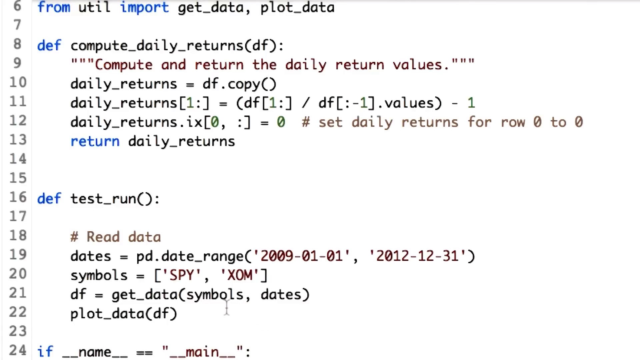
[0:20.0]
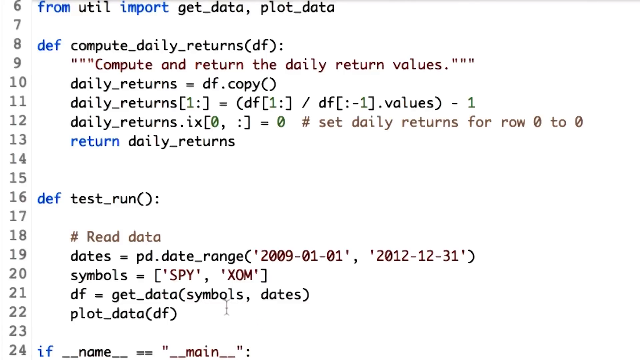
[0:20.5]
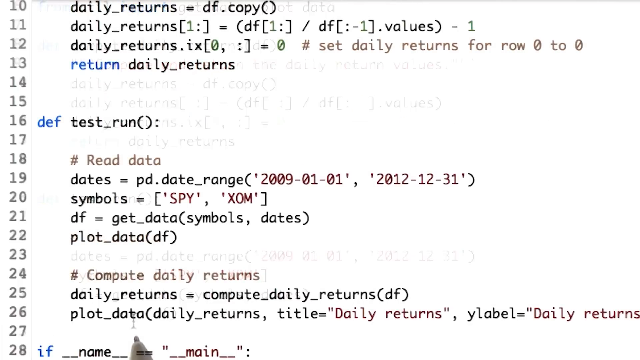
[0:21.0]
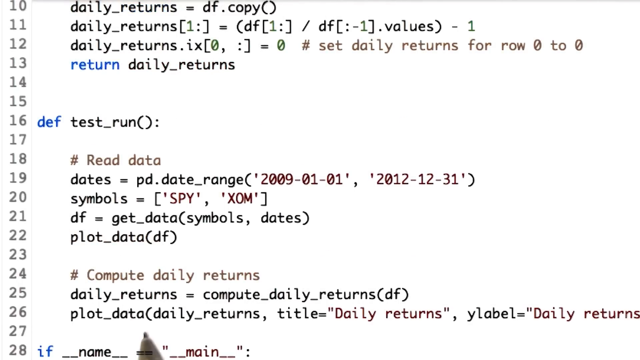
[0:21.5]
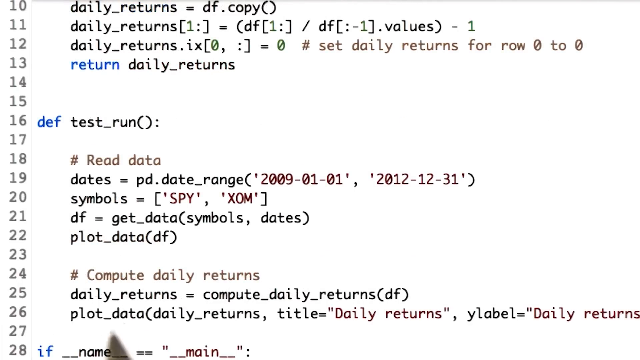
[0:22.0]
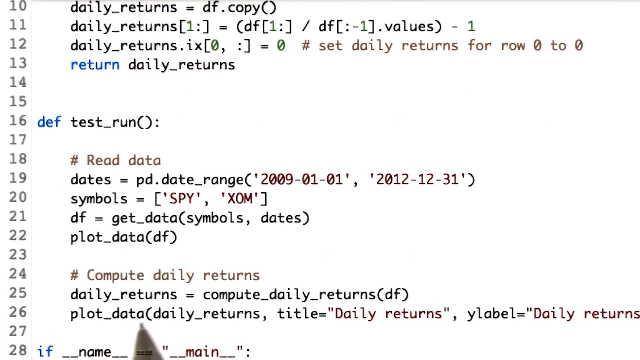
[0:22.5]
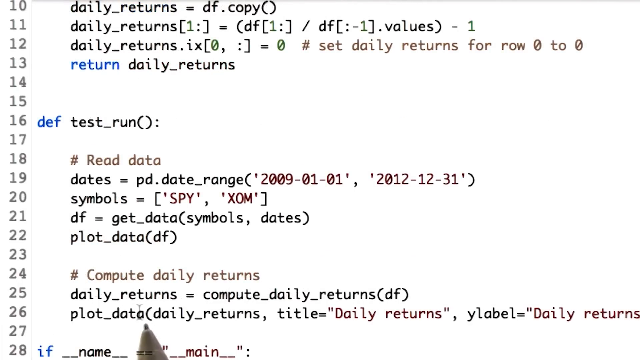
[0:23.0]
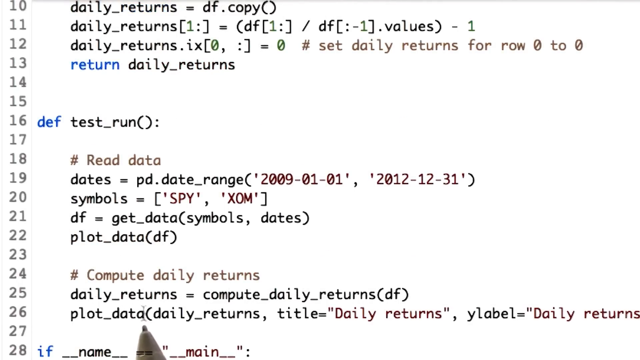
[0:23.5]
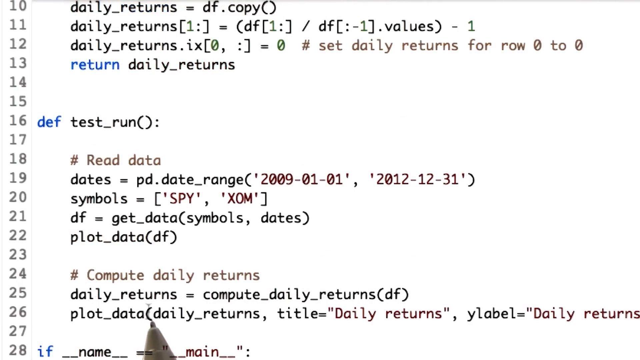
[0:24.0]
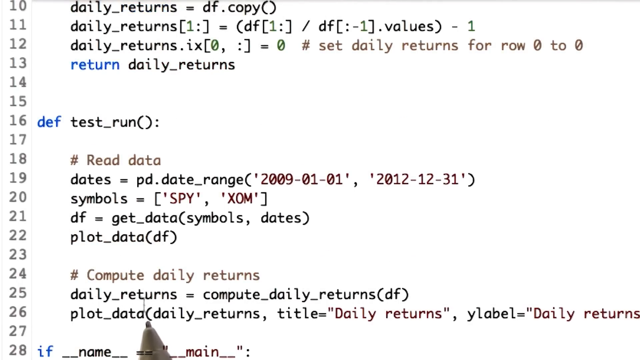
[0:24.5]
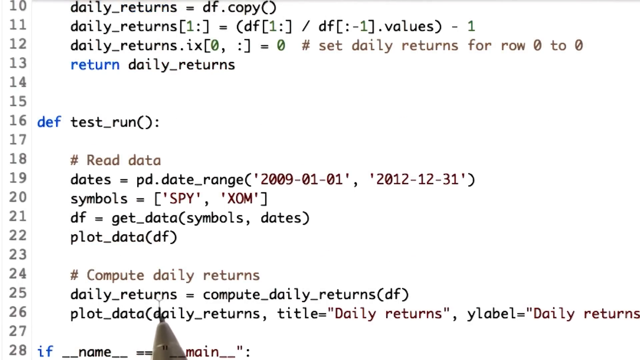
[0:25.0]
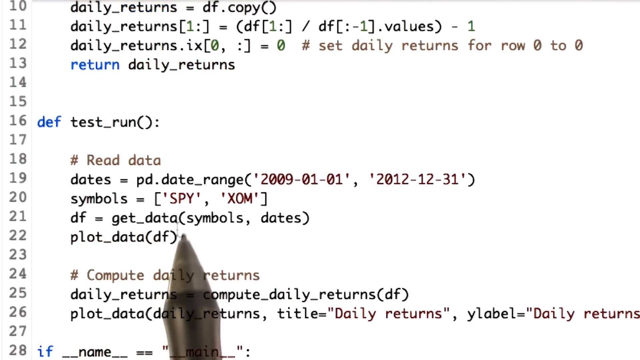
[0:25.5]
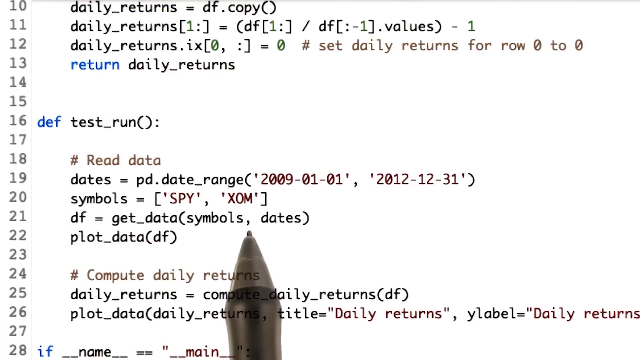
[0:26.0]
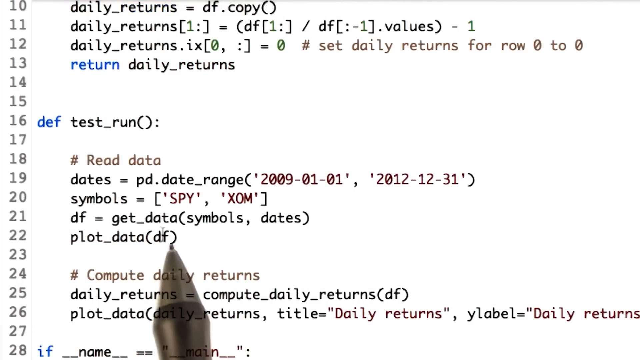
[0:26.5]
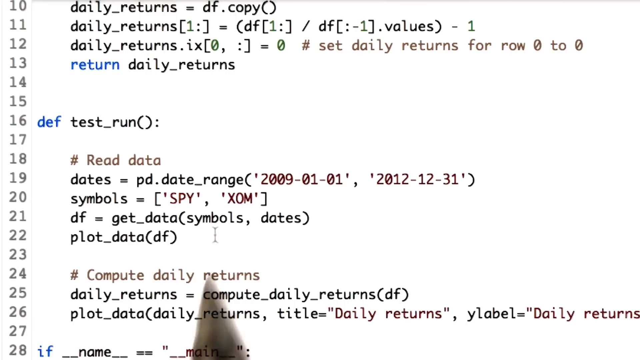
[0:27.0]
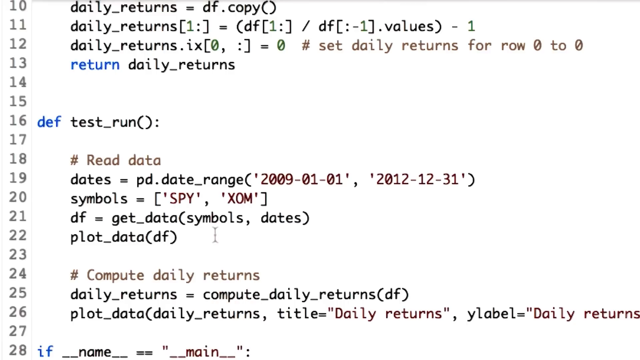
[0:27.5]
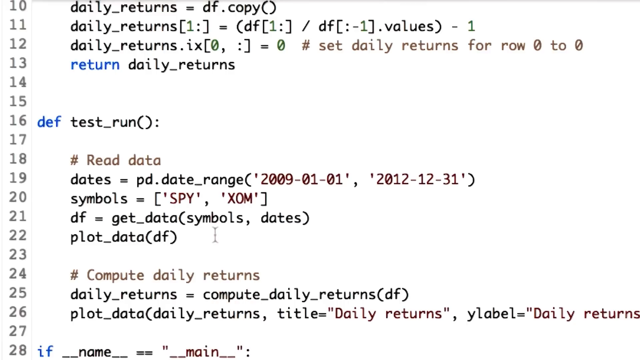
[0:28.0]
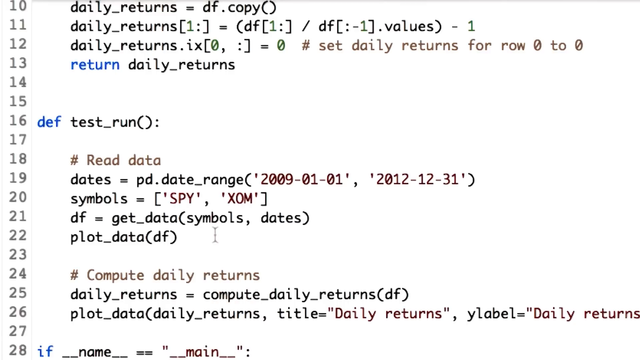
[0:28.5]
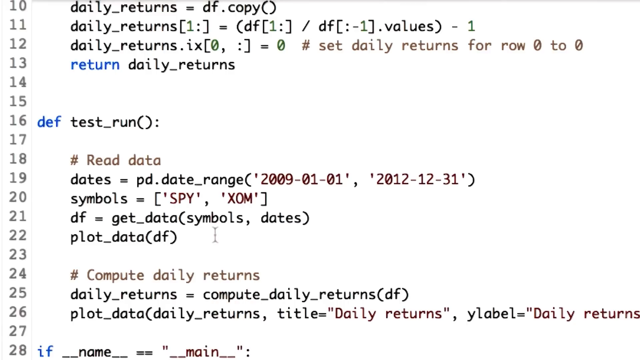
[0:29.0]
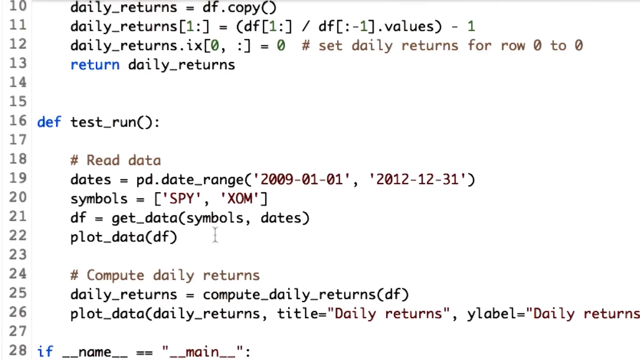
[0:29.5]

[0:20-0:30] The same screen of code moves on to a different page with a fade-out transition. The row numbers on the left now run from 10 down to 28, a little further down. The black pen is again at the bottom of the screen; its tip shows that it is a pen of the kind used on a tablet screen or touch screen. It moves the cursor around. As the pen moves up a bit, more of it becomes visible; it looks a bit translucent, so it is perhaps an animated, virtual pen rather than a real one. It keeps moving the cursor around, pointing at different parts of the code.